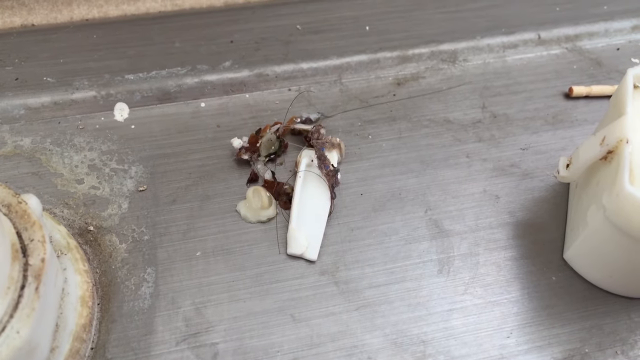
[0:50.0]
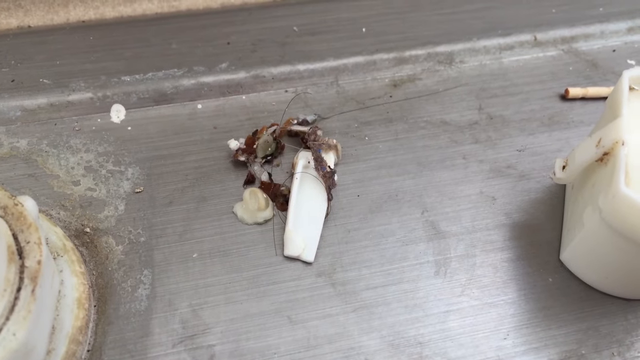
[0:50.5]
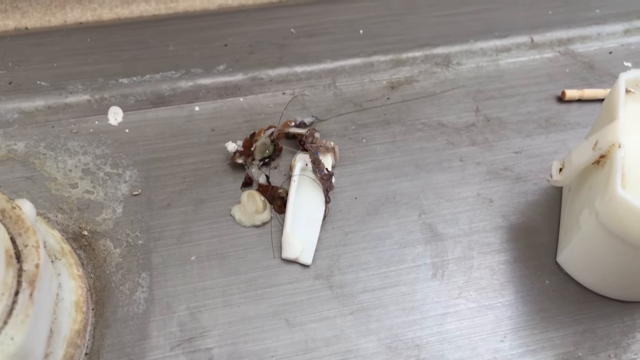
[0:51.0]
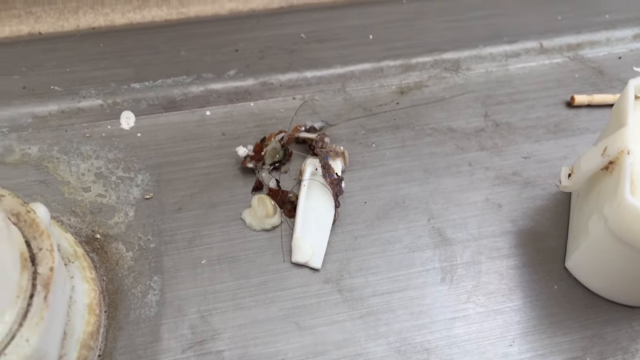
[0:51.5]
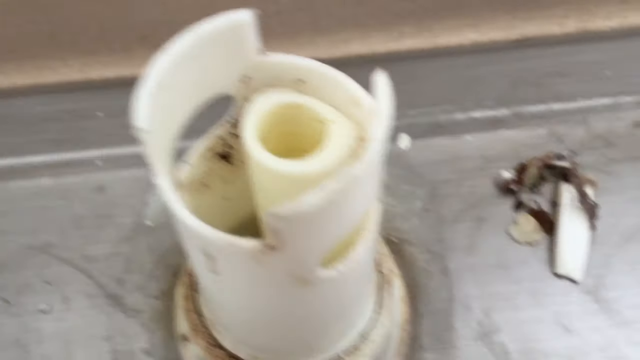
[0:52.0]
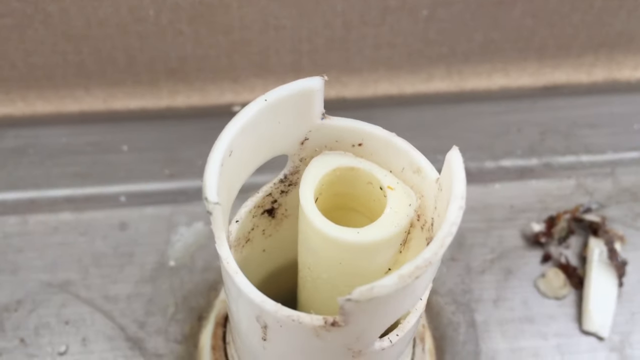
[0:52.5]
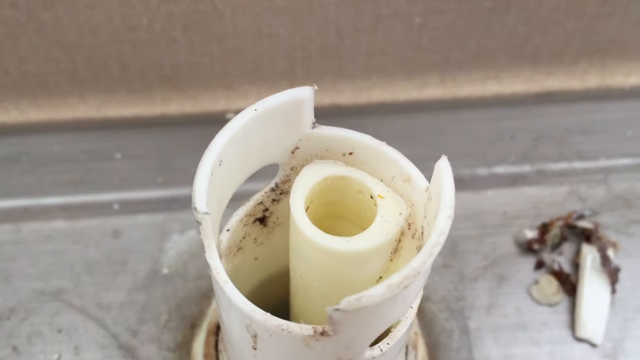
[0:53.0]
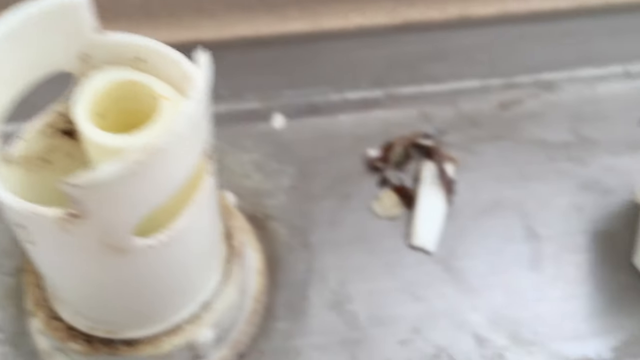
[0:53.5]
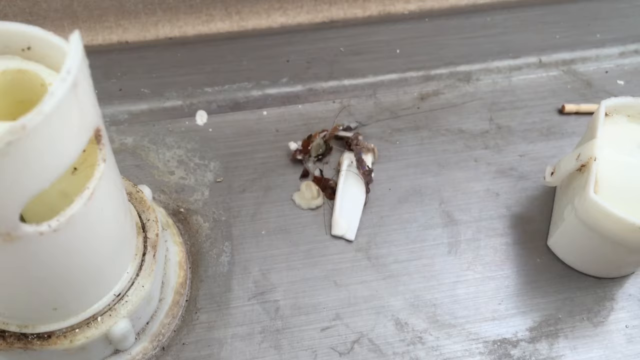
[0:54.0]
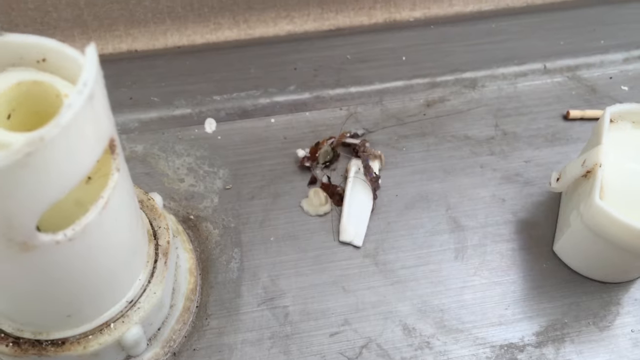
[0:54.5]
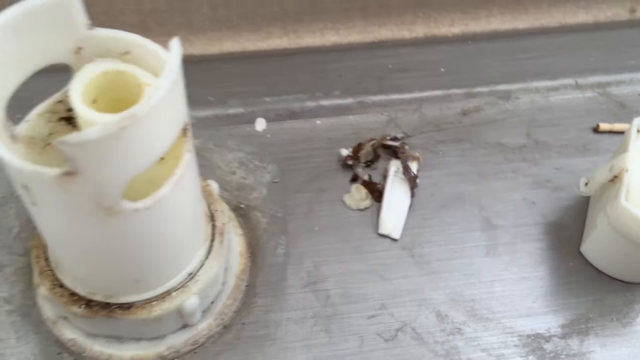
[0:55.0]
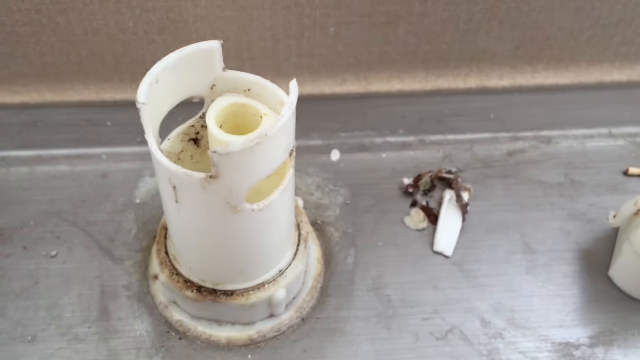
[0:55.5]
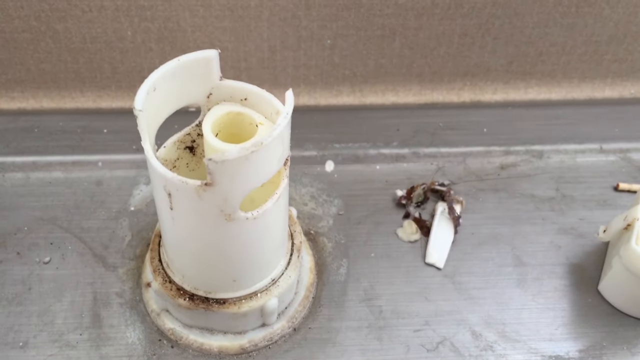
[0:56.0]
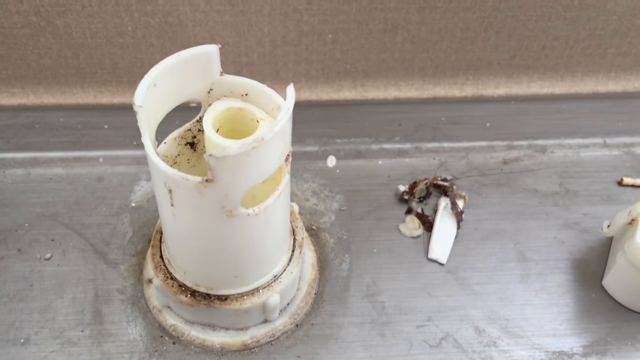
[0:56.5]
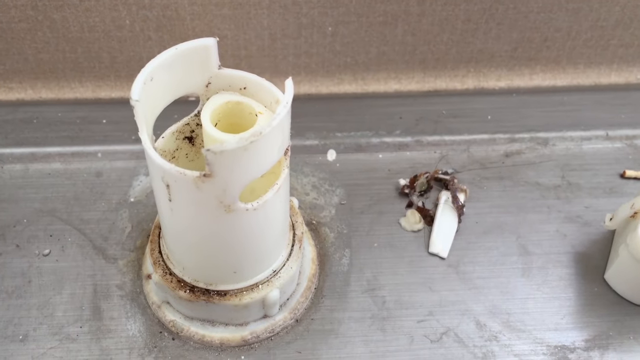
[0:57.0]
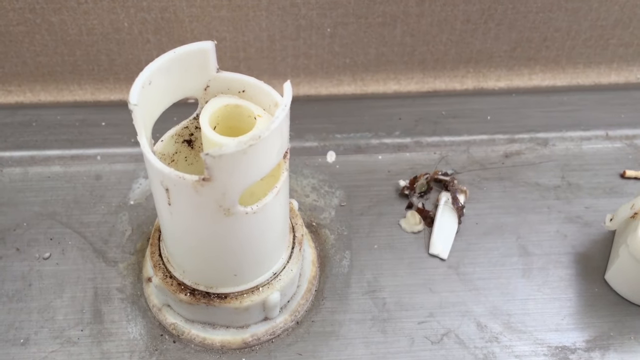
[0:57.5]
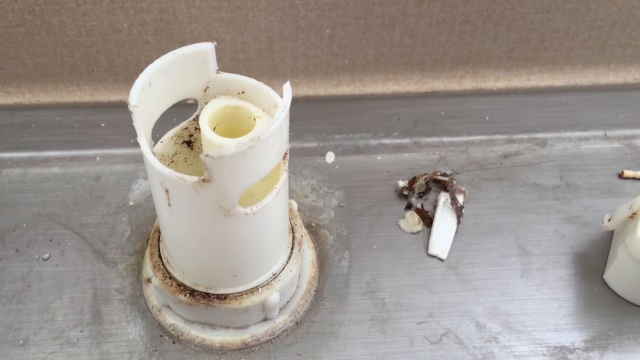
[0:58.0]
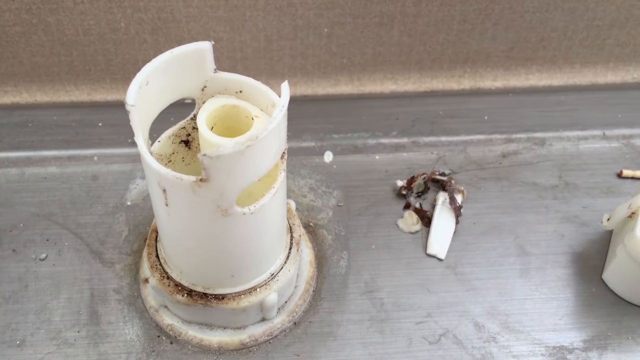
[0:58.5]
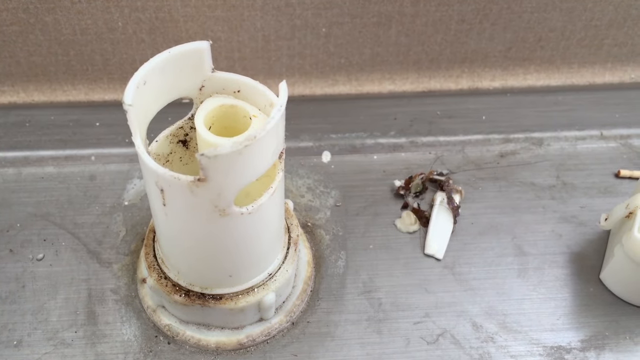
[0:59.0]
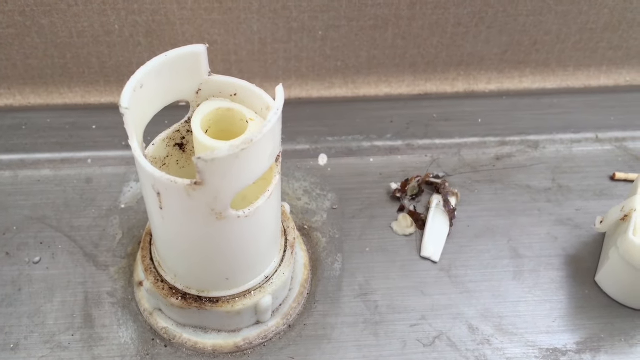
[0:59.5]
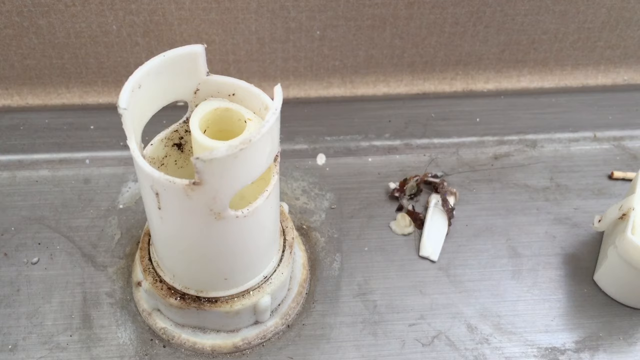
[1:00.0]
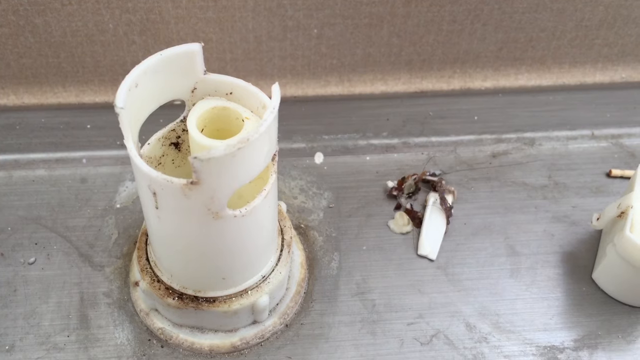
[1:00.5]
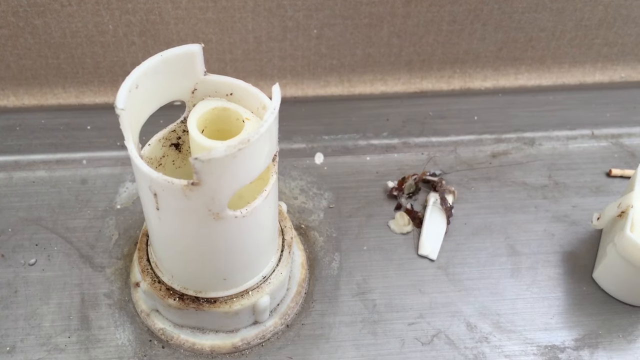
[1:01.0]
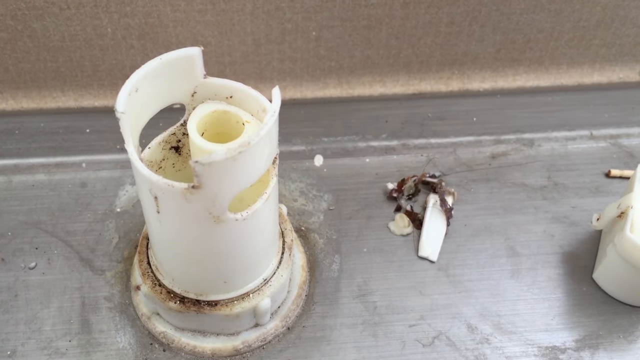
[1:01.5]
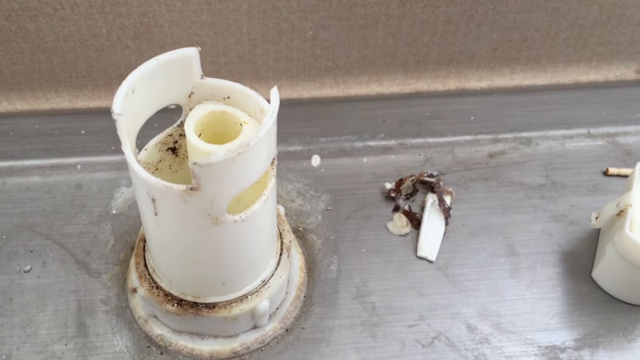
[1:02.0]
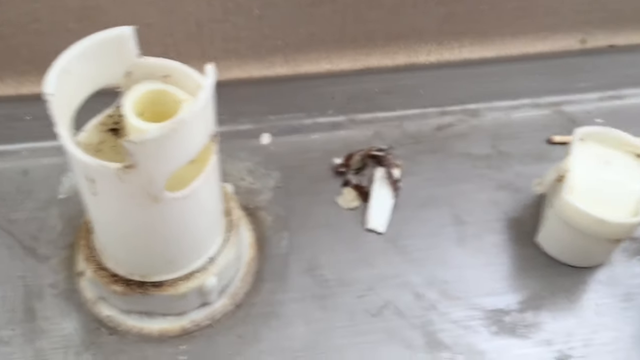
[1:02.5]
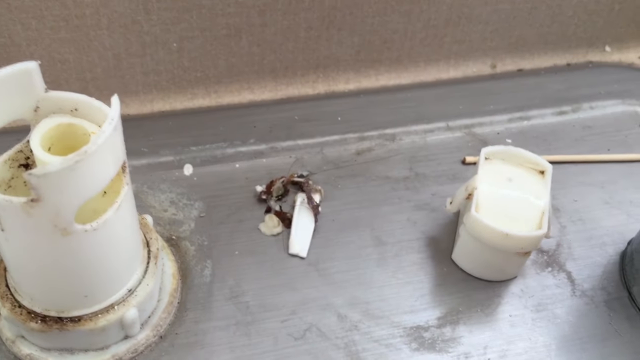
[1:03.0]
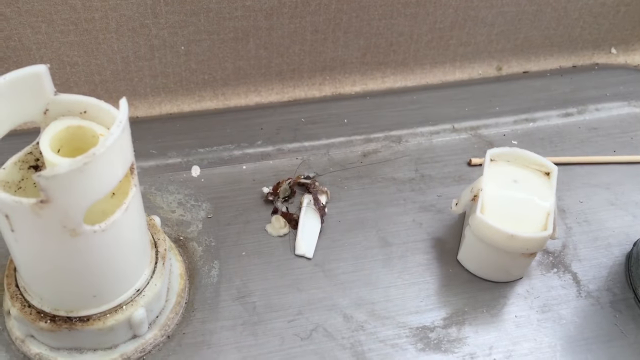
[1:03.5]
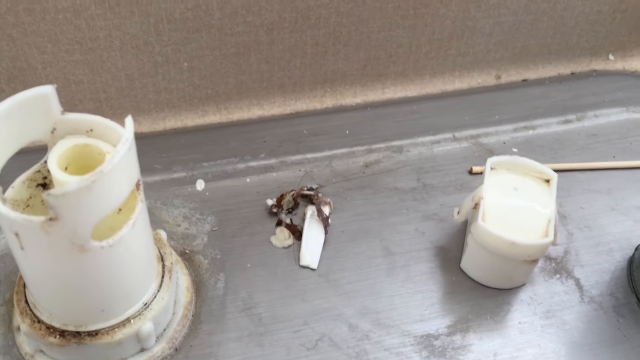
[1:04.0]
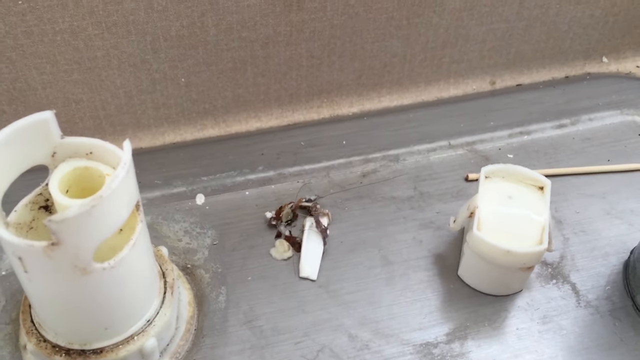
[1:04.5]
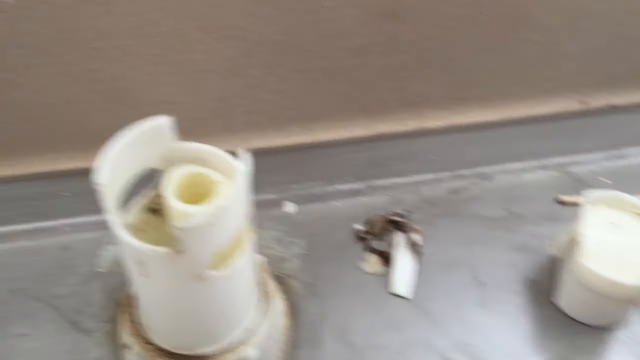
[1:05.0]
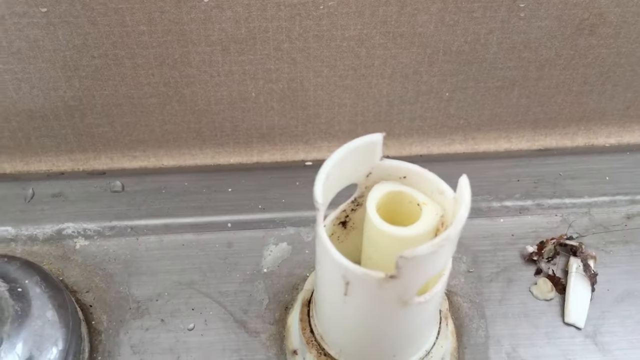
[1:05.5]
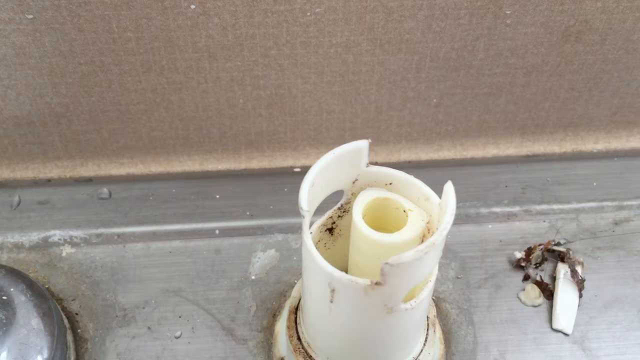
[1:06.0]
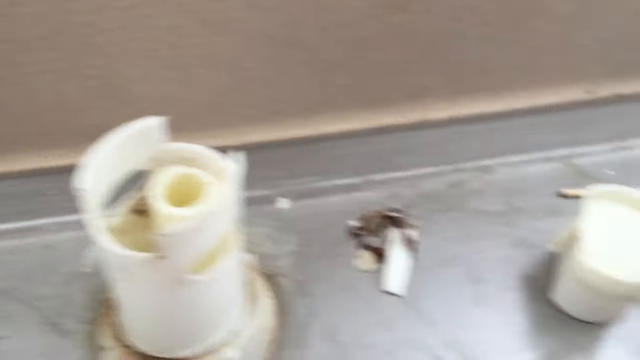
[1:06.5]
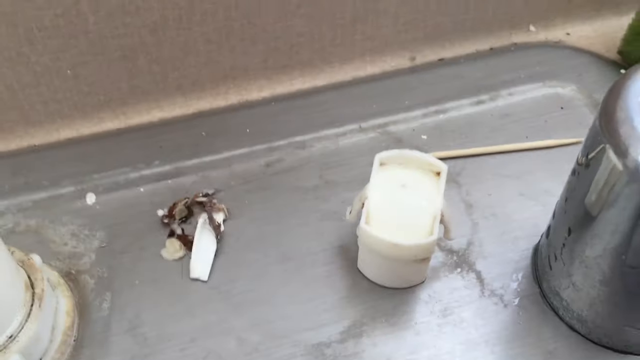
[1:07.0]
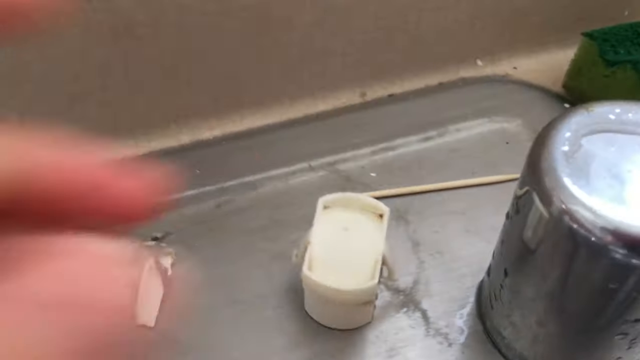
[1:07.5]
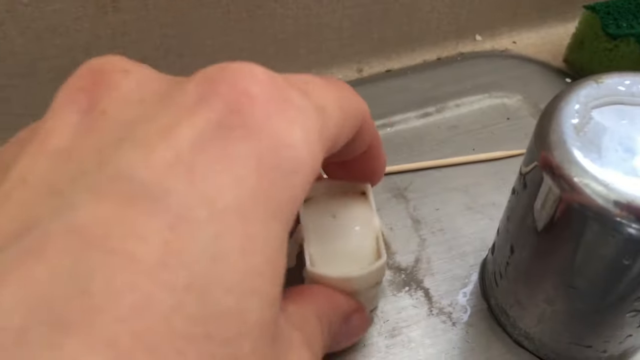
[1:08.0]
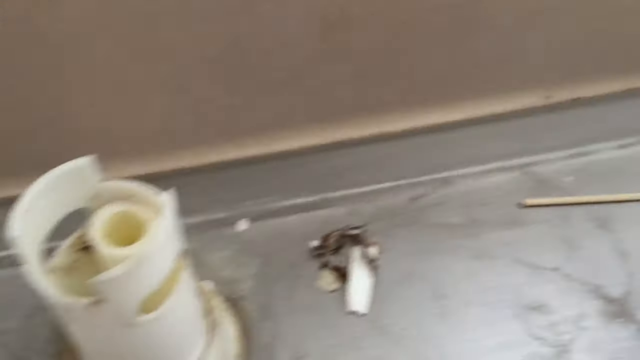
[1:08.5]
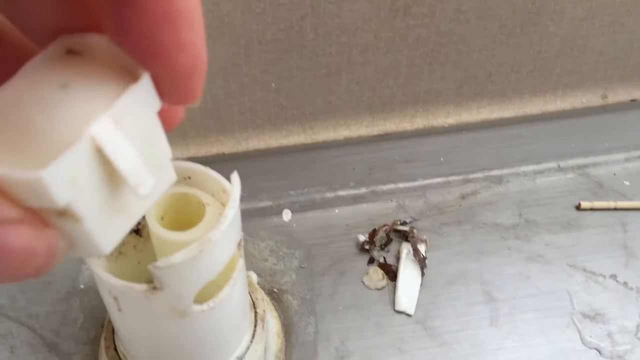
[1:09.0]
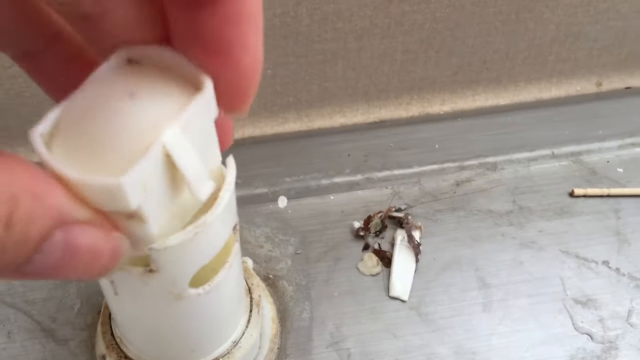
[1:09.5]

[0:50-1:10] An overhead view shows lots of gunk and debris, including what appears to be hair and spiderwebs, laying on the stainless steel sink surface to the right of the pipe. The cap for the pipe and tube is on the right side of the screen, the pipe itself is on the left, and the gunk and debris are between them. The camera slowly moves to the left and focuses back on the pipe, where the gunk has been completely removed, leaving just a little small debris around the inner walls. After a few seconds on this area, the camera pans back to the debris and gunk on the sink surface, then zooms out a bit so the pipe and the debris are visible at the same time. The camera focuses there for several seconds before panning to the right, bringing all three items into view: the pipe, the gunk and the cap for the pipe.